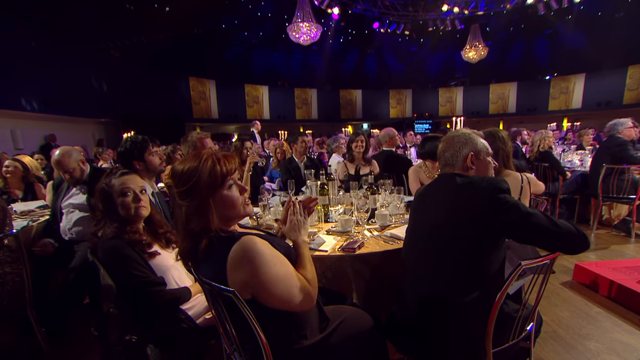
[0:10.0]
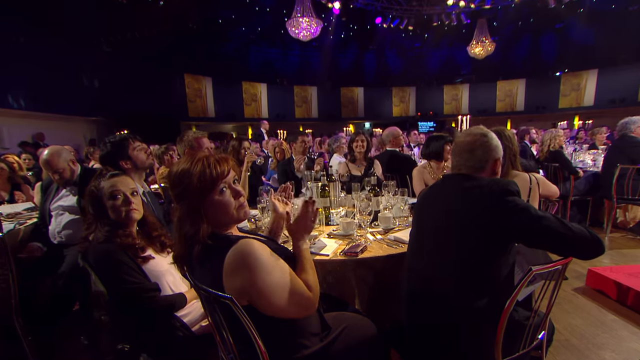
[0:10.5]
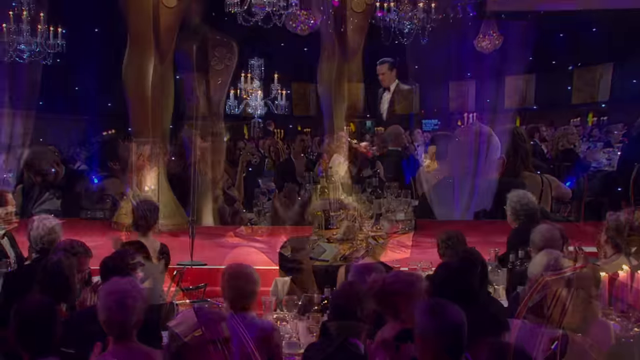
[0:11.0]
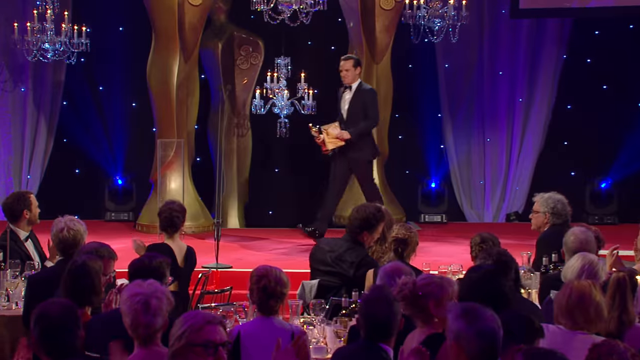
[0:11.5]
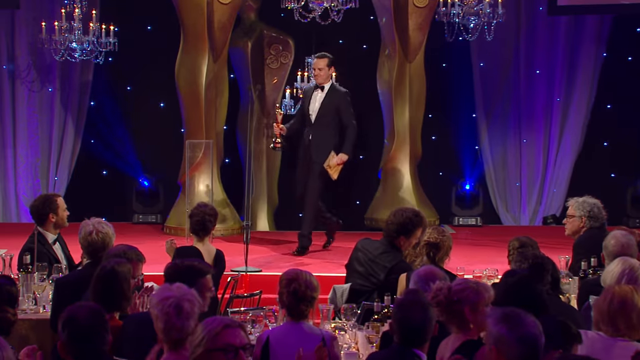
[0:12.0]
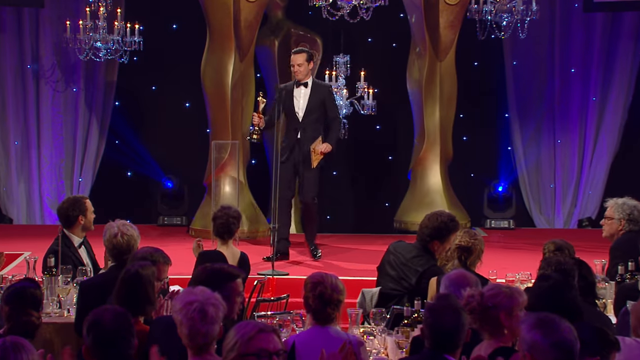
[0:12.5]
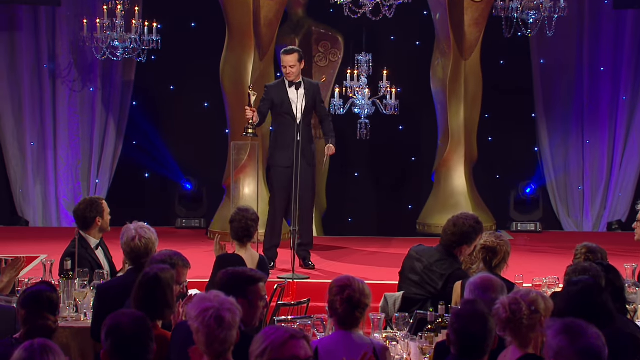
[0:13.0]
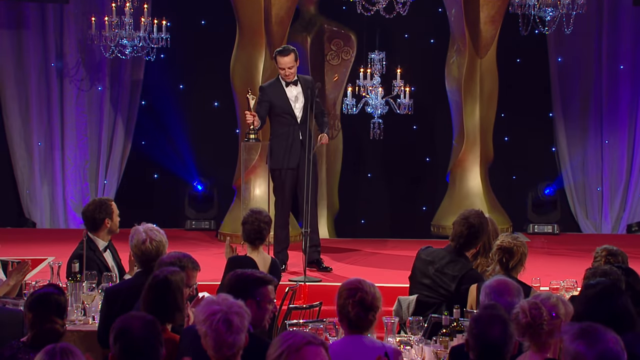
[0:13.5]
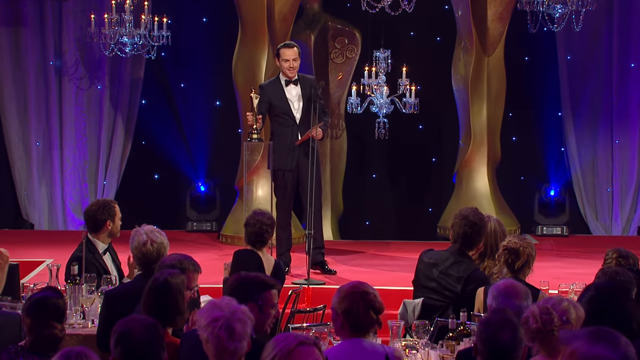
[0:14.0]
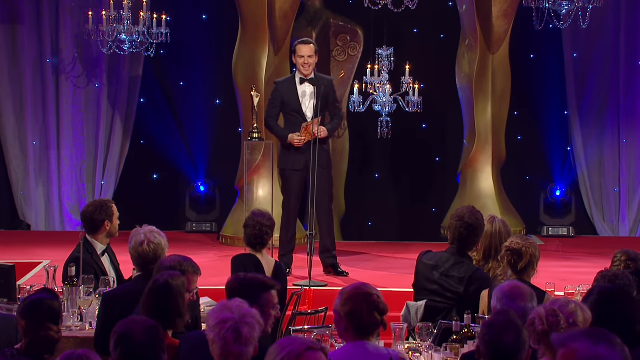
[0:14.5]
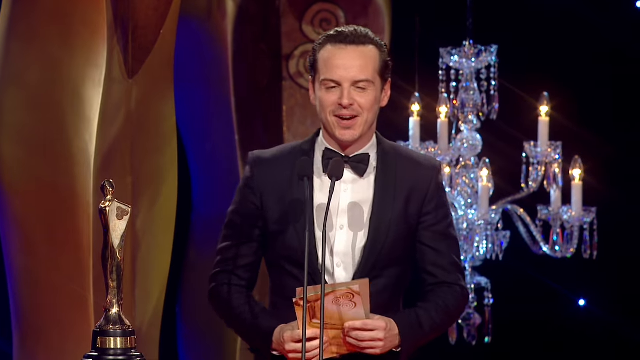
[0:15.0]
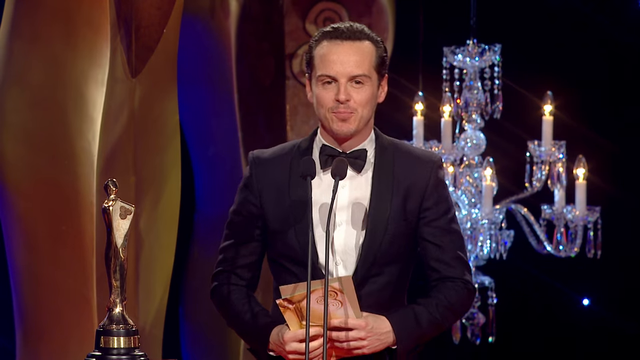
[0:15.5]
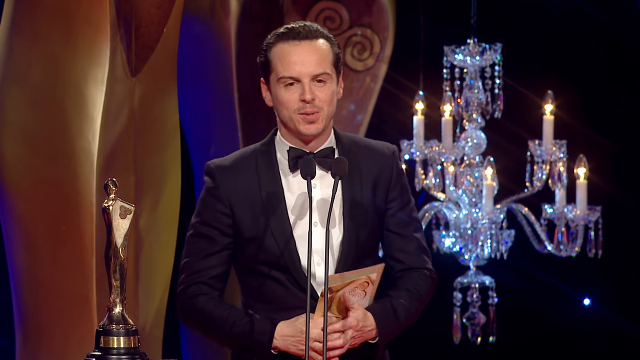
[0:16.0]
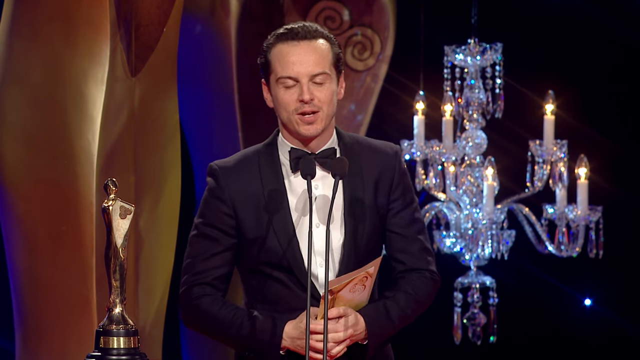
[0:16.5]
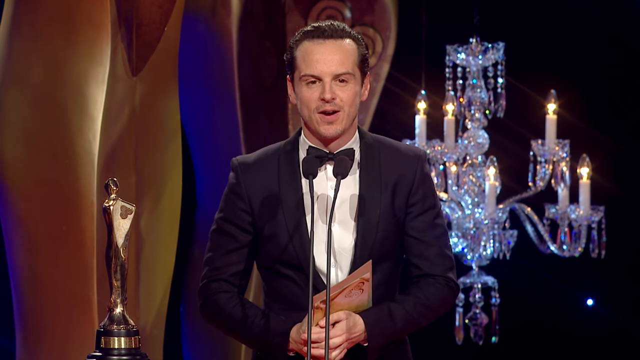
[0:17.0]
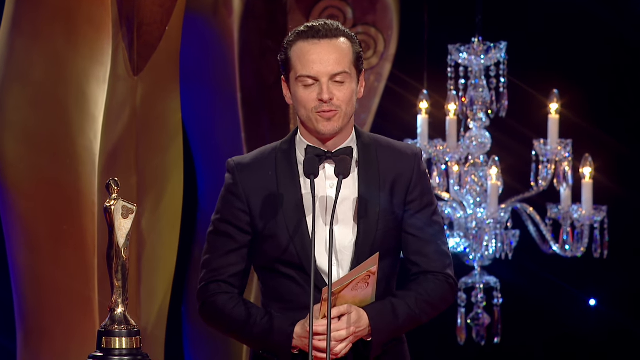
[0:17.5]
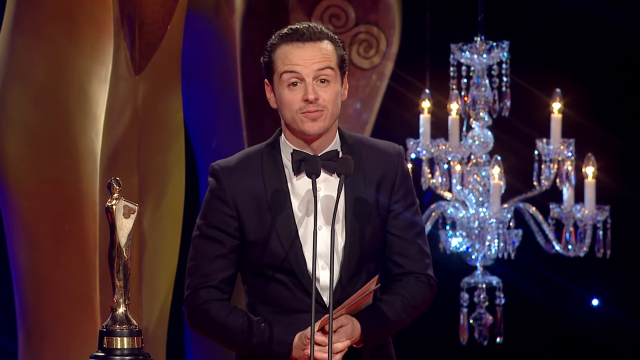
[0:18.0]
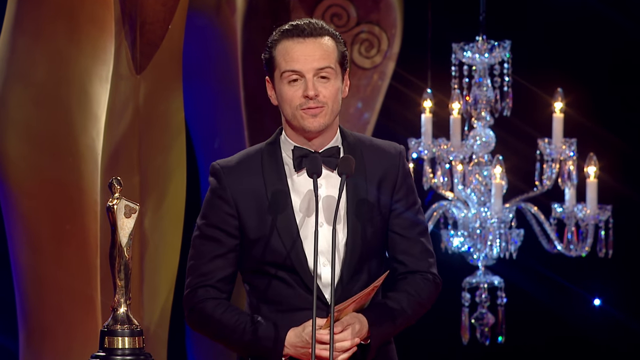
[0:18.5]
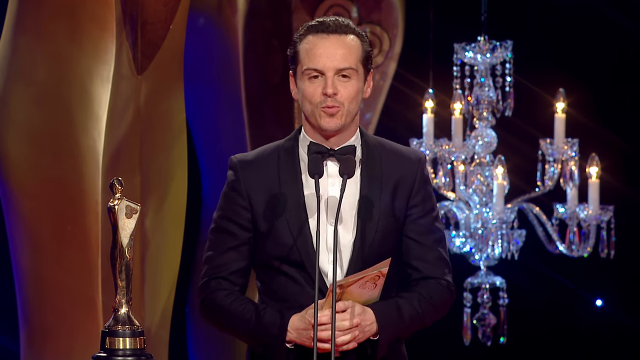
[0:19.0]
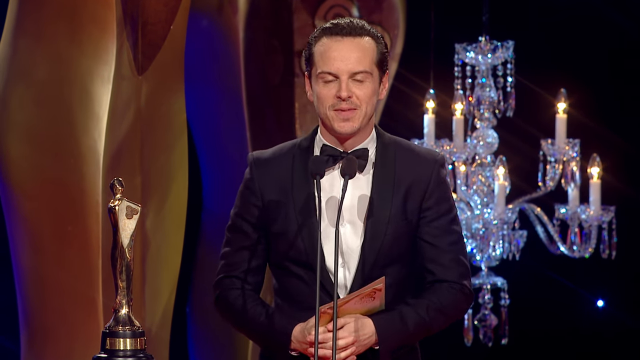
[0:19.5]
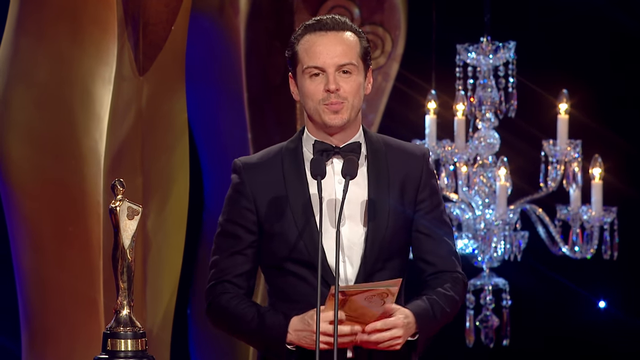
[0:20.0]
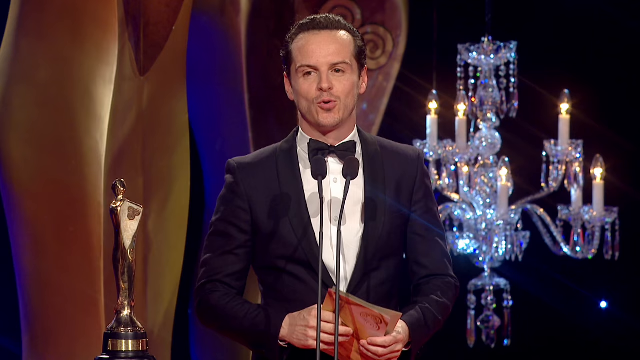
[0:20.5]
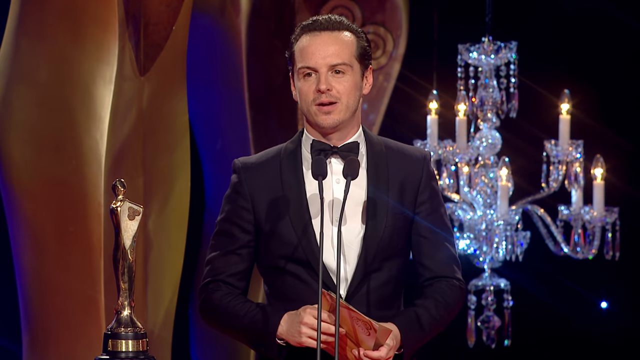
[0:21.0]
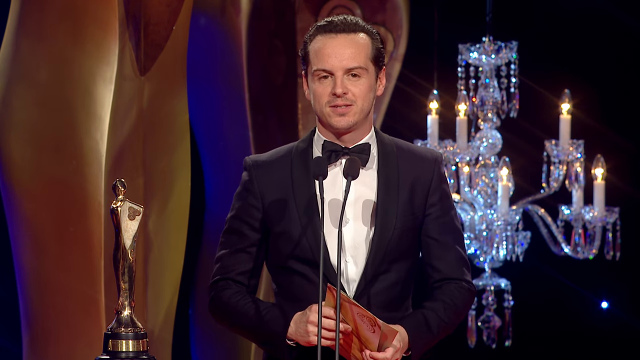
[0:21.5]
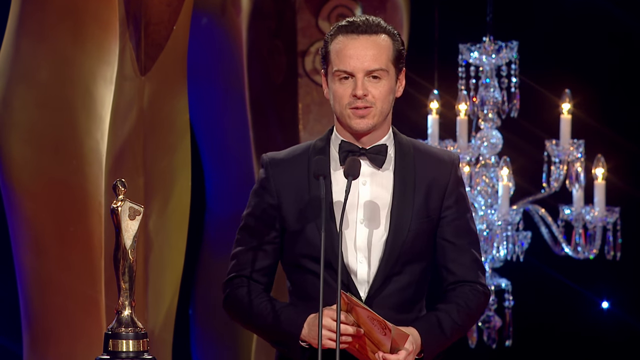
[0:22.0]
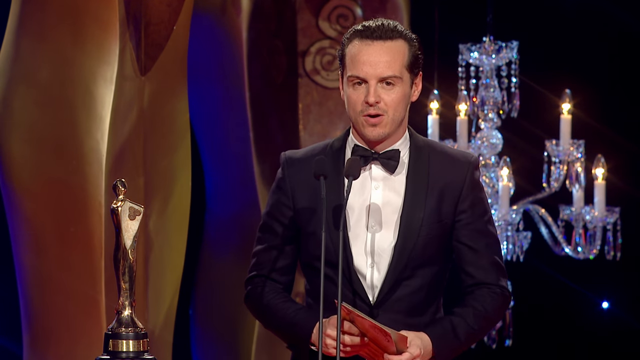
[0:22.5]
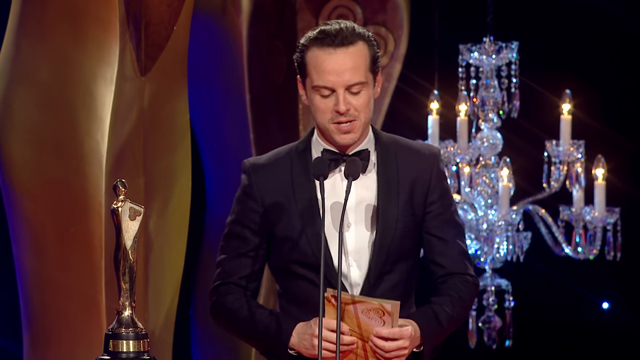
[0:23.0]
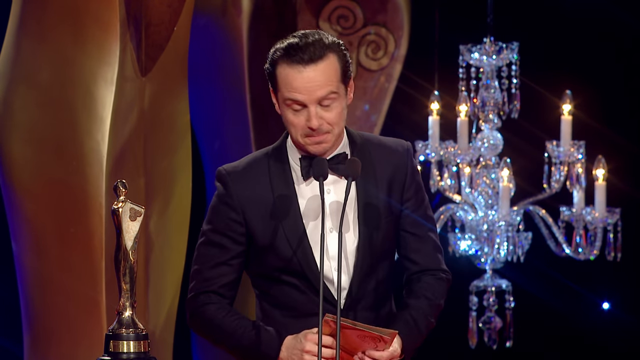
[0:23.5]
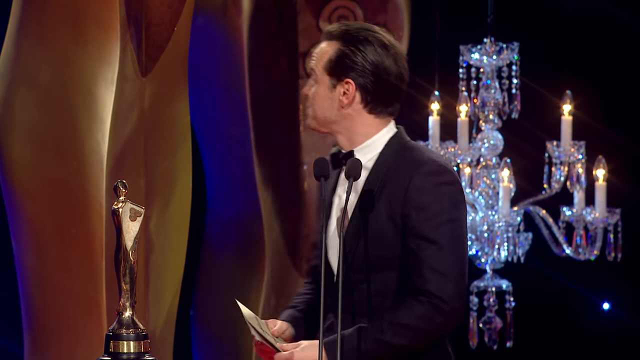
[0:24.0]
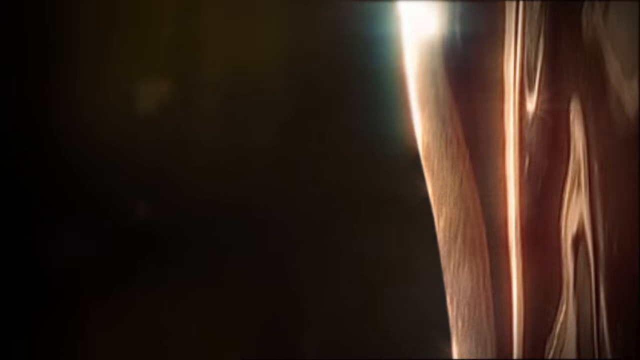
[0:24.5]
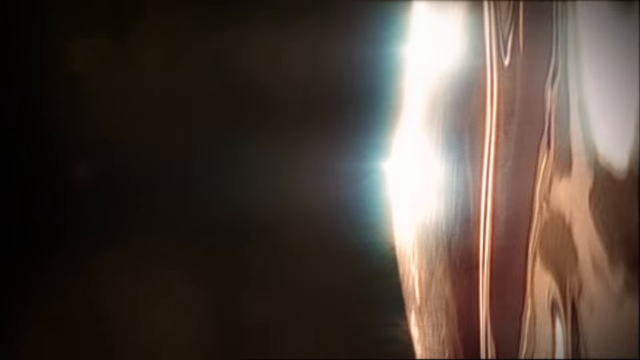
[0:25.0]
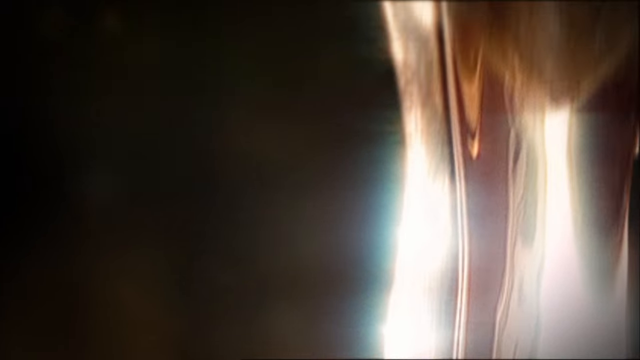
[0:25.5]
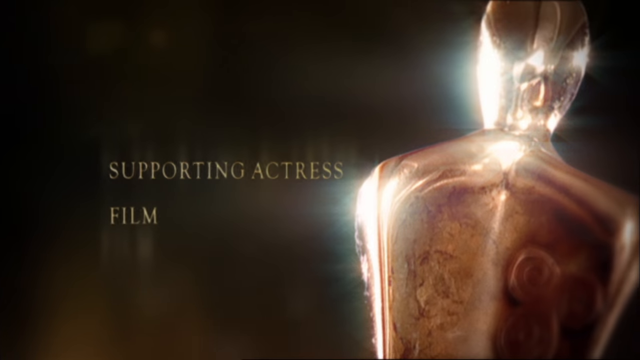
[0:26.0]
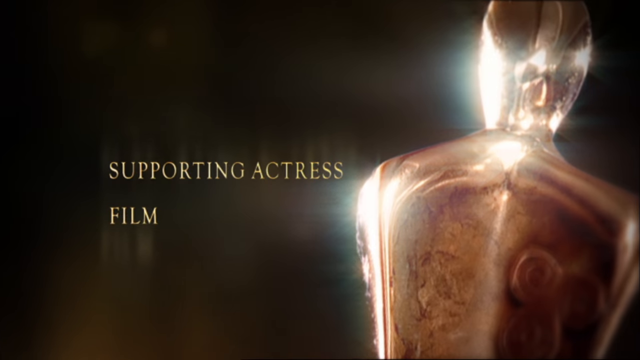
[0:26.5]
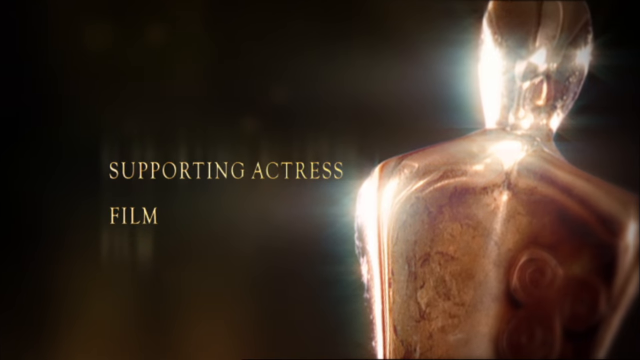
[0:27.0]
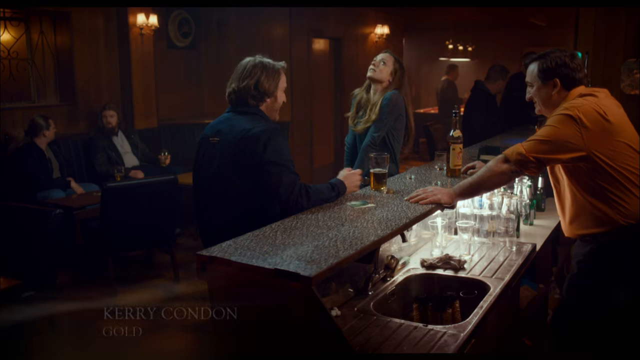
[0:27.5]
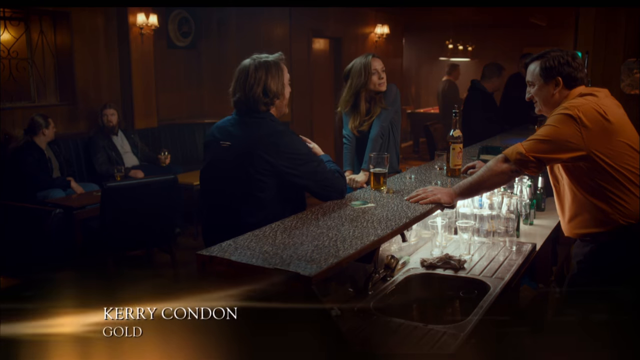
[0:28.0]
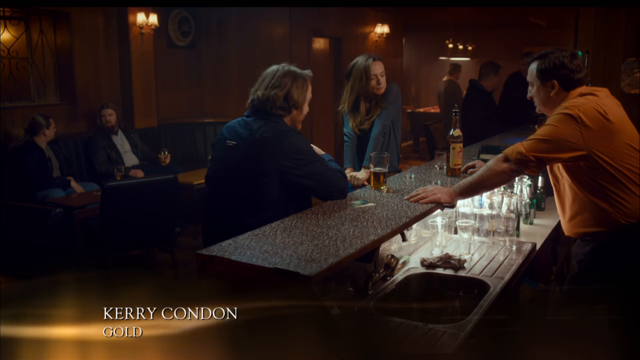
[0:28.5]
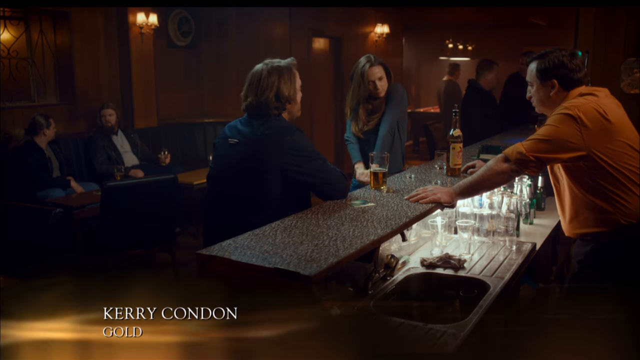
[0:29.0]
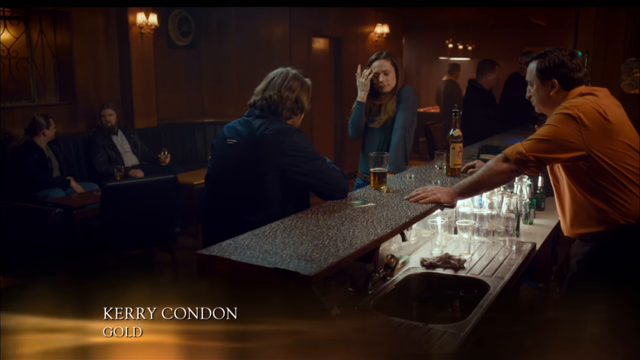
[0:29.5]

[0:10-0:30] The camera continues out over the audience: a number of men and women sit at tables, looking as though they may be wealthy. The ceiling looks blue with stars on it, with chandeliers in the background, and there are square yellow things. The audience claps. The camera pans back, and a man comes onto the stage. The stage is red, chandeliers hang down behind him, and he holds an award. The camera zooms in on him; he wears a black tuxedo, holds a card, and speaks to the audience. He turns around, and a supporting actress film is shown: a scene of probably about three people in a bar, two men and a woman, who look like they may be the main characters, with other people in the background.